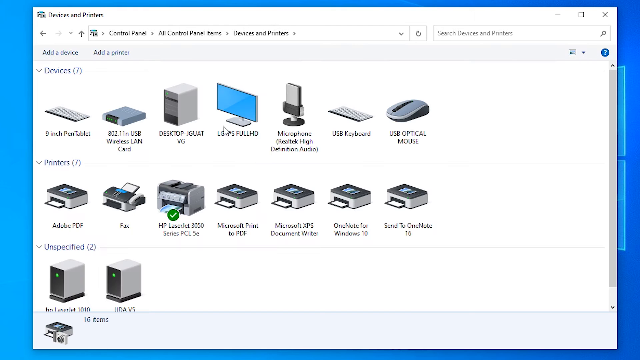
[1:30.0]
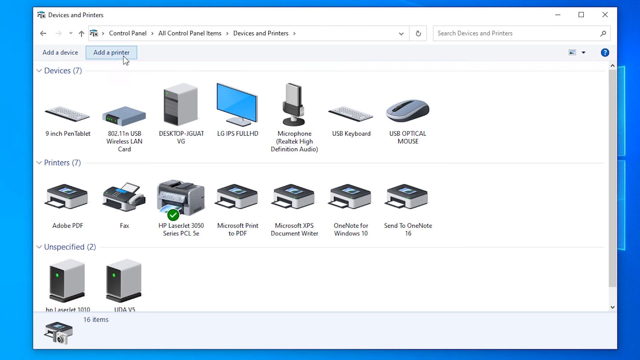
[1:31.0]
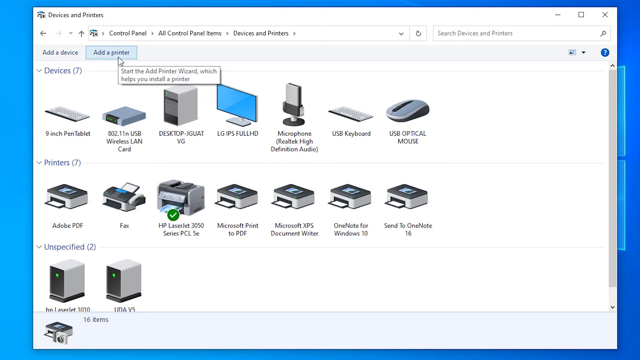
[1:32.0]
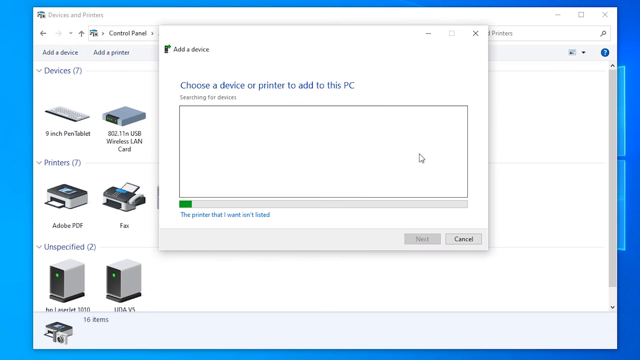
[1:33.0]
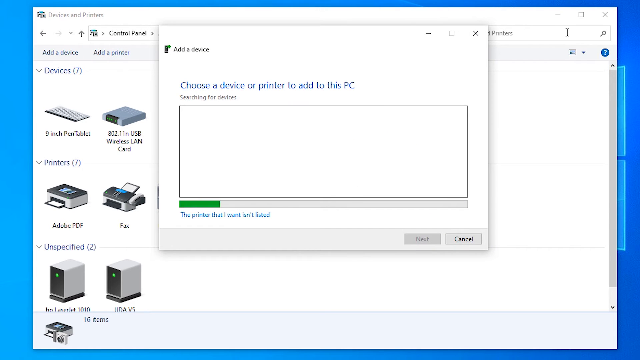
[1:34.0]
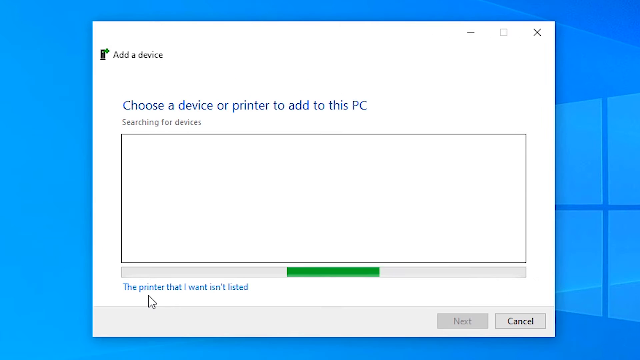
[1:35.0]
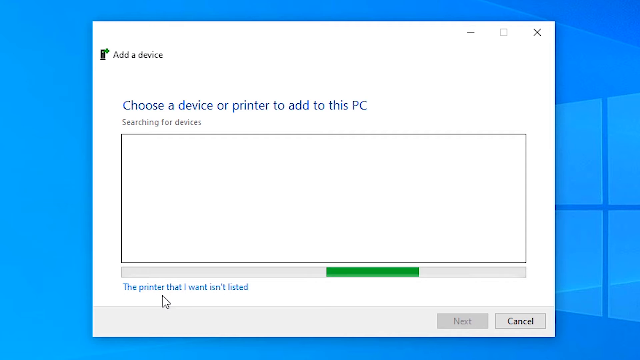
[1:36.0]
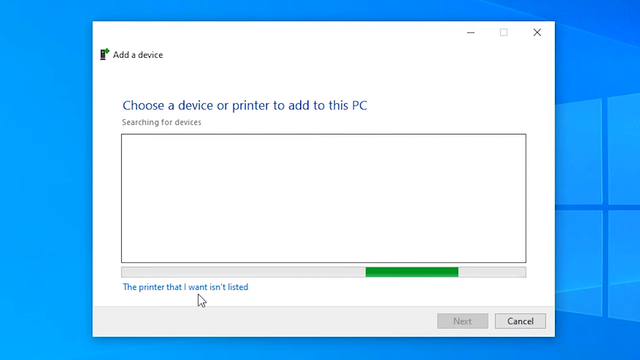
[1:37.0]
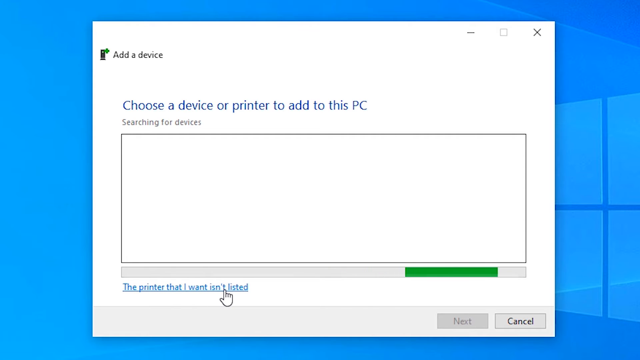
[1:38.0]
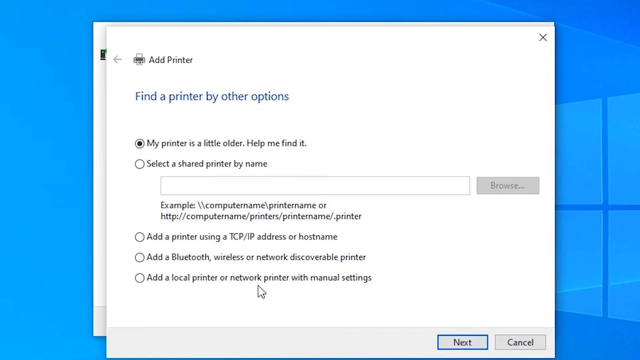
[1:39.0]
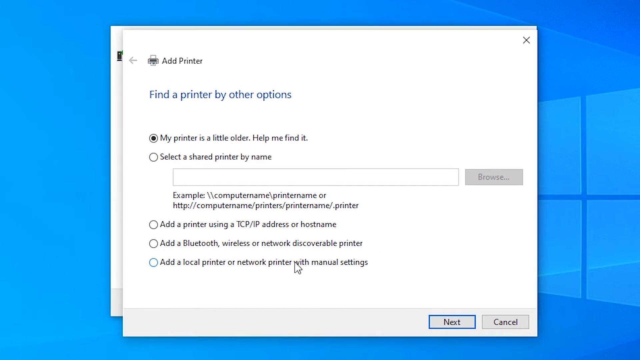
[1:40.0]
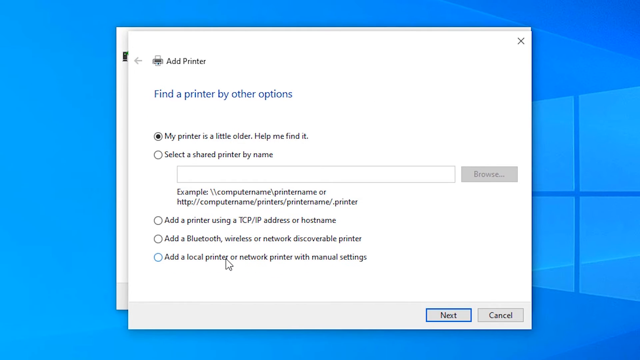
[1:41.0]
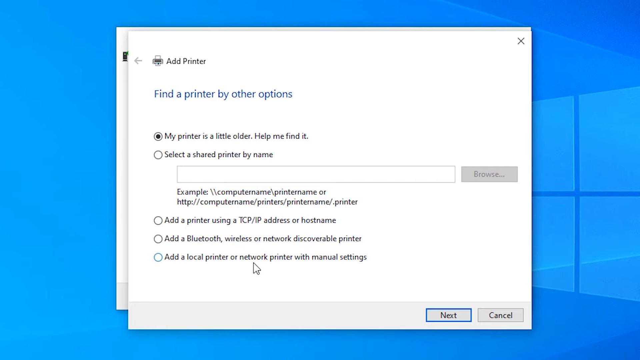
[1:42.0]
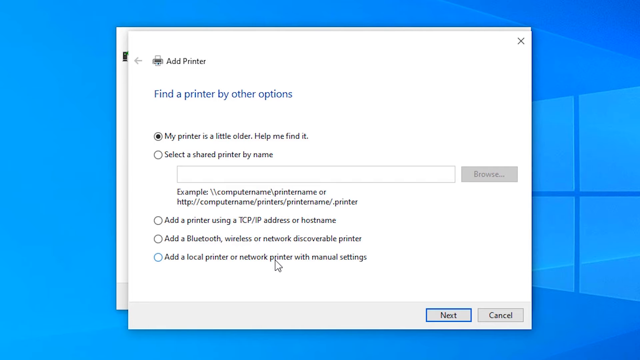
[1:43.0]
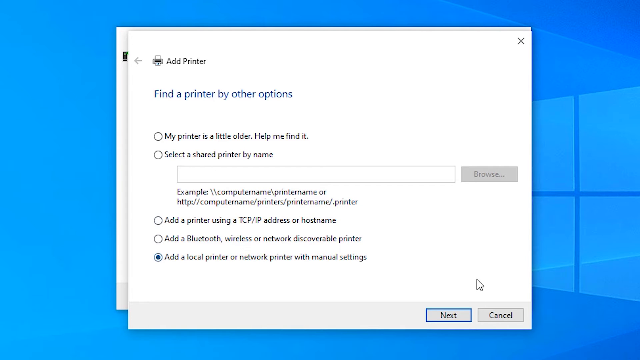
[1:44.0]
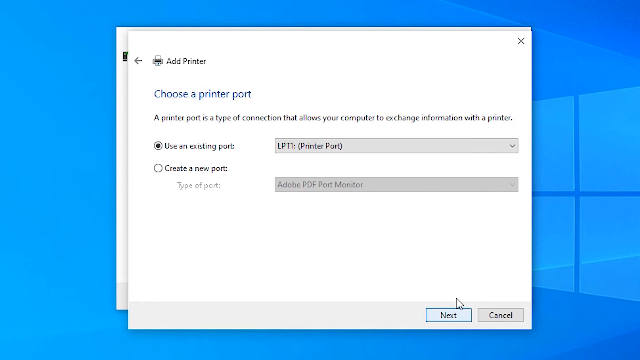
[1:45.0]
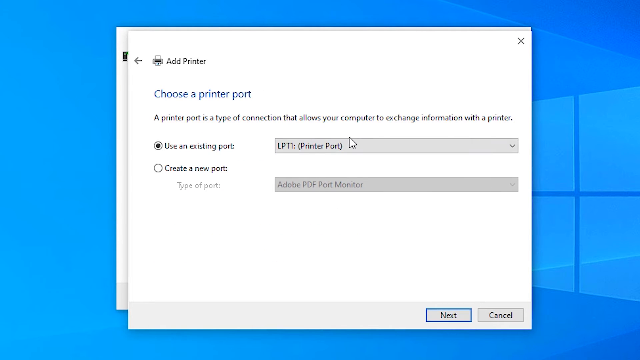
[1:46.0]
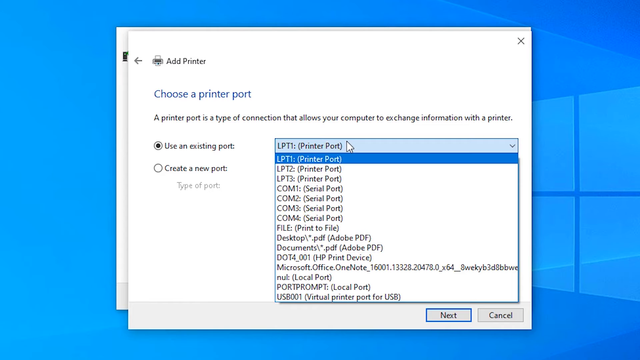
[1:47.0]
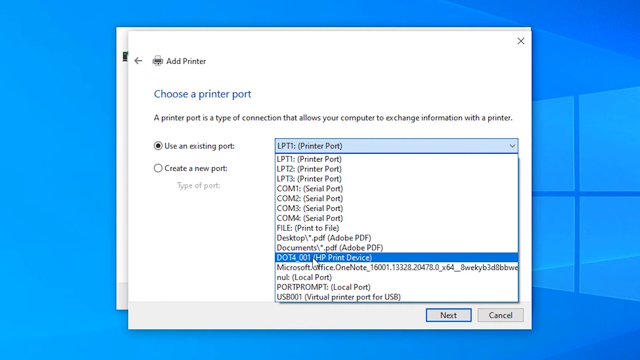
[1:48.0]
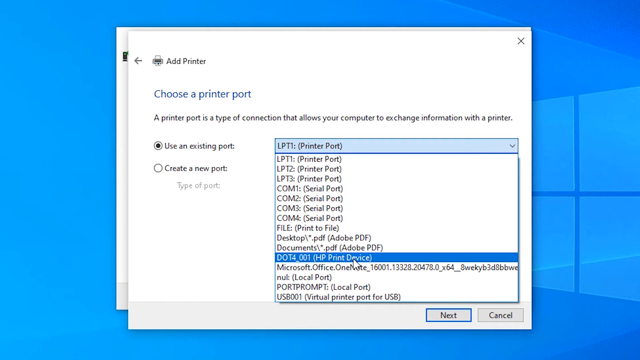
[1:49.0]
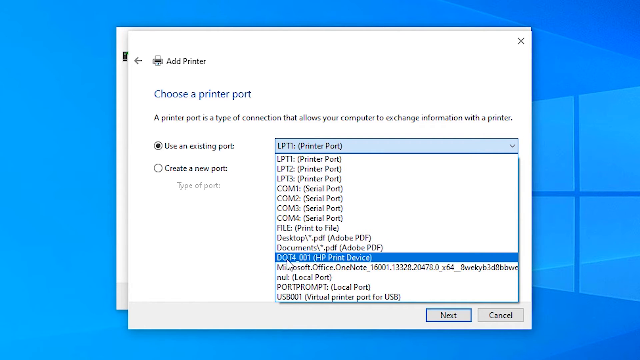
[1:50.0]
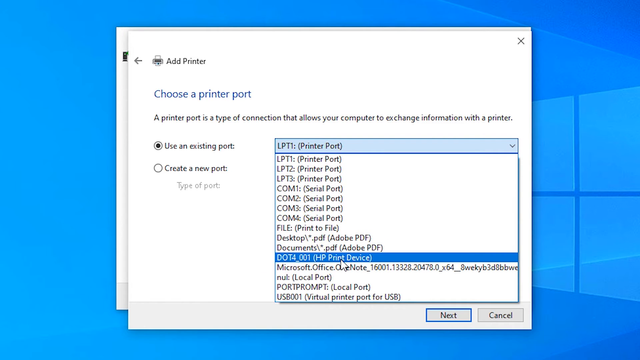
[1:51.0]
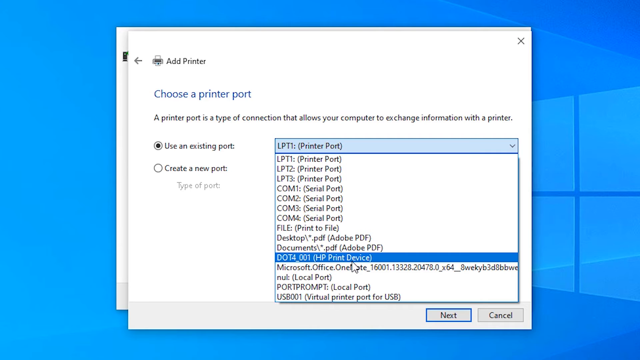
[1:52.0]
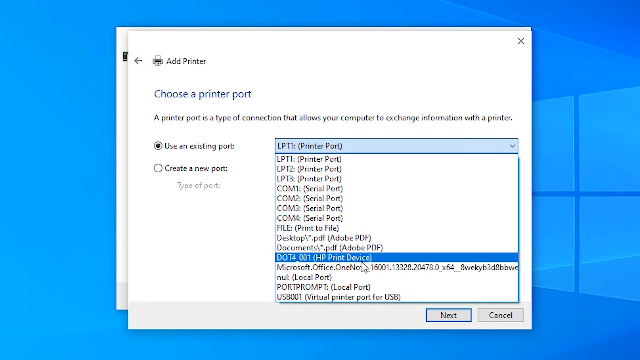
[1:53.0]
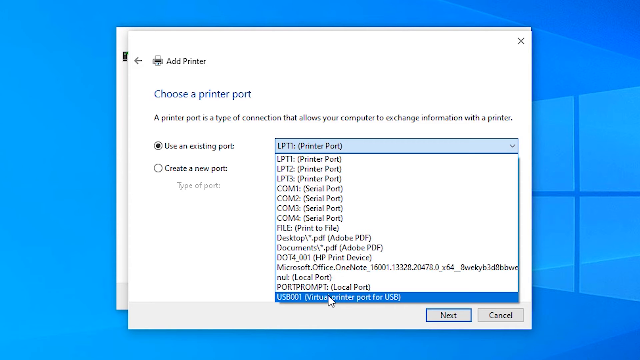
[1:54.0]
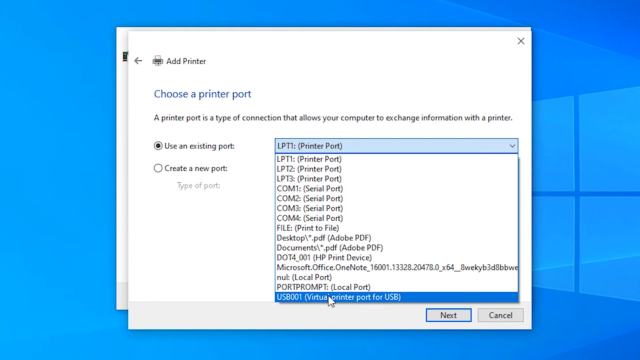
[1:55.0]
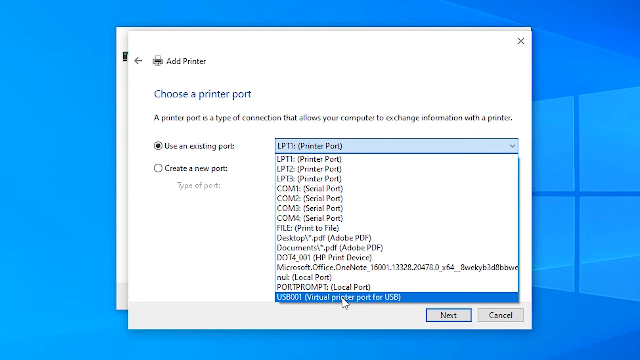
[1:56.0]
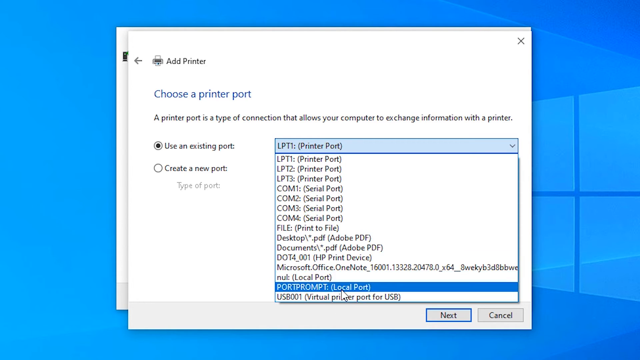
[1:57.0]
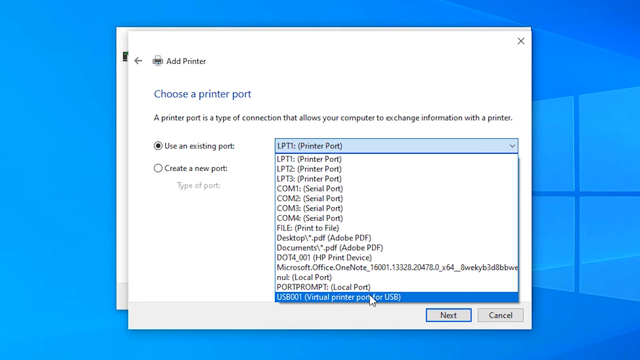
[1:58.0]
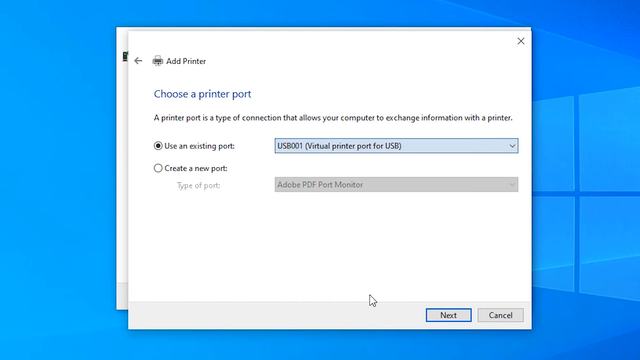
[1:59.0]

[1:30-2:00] The video, a little wider than it is tall, shows someone's desktop with a light blue background, mostly overlaid by a window. The window says "devices and printers" in its upper left, a section of the control panel, with all the devices and printers listed below. The add printer button near the upper left is clicked. A screen comes up with a green bar at the bottom progressing to the right, showing it is scanning, and blue text at the top reads "choose a device or printer to add to this PC". Below that is an empty box. It then switches to another screen that says "add printer" at the top and, below that, "find a printer by other options". Under that, a toggled option with a little dot in it says "my printer is a little older help me find it", with other options below. The cursor arrows over the bottom option, "add a local printer or network printer with manual settings", and next is clicked. This leads to another screen within add a printer, where the first option's drop-down menu is opened.